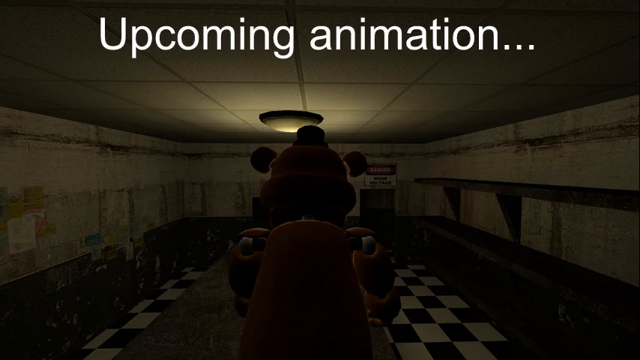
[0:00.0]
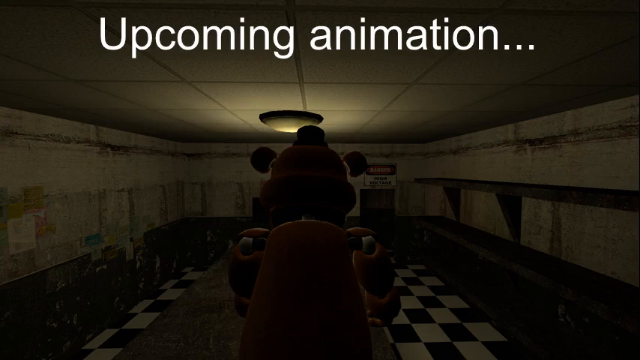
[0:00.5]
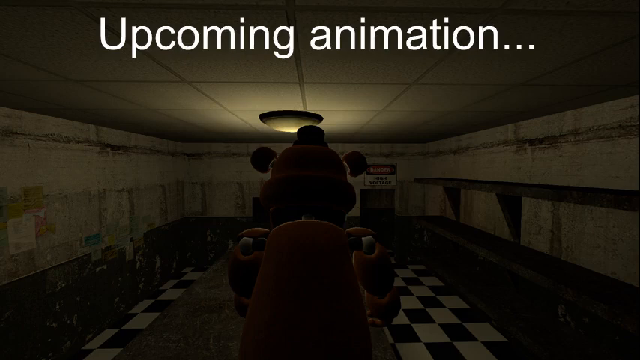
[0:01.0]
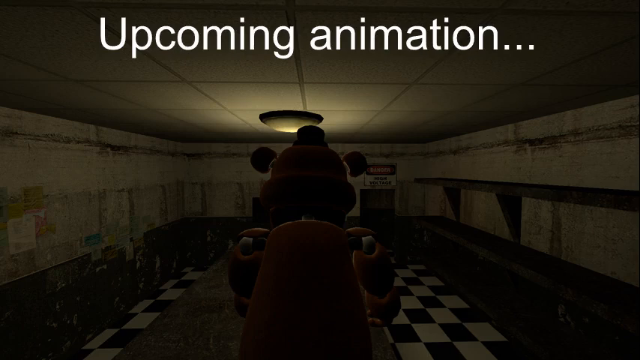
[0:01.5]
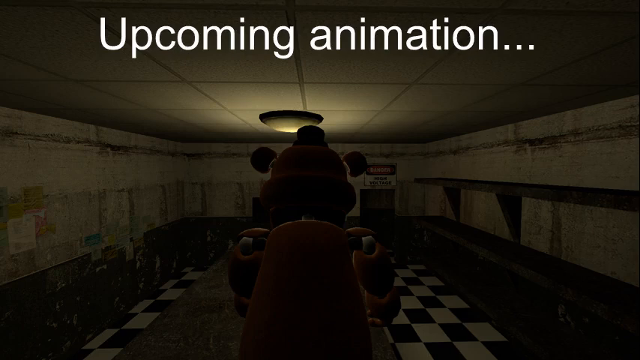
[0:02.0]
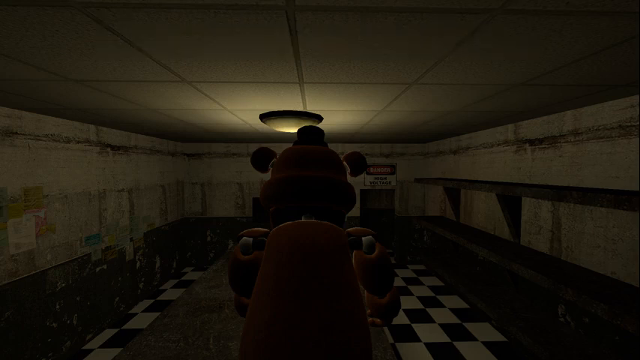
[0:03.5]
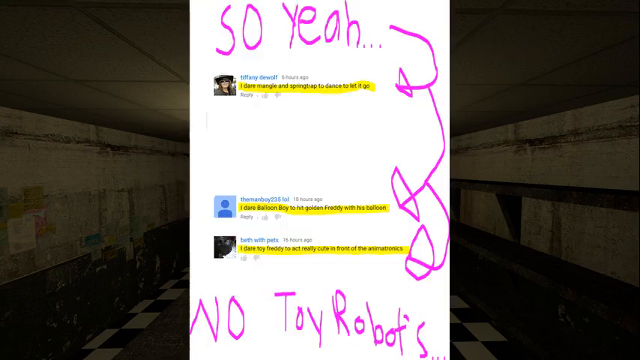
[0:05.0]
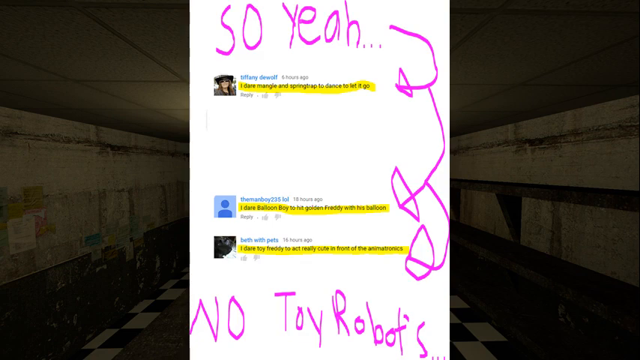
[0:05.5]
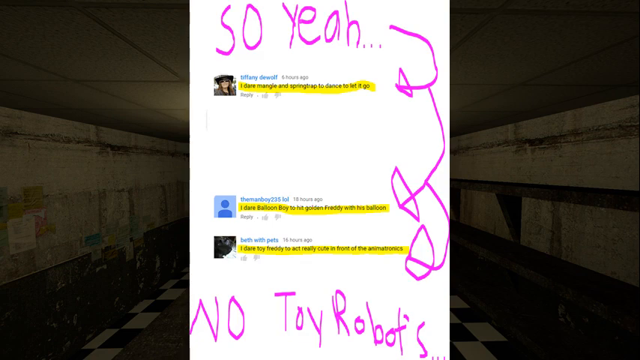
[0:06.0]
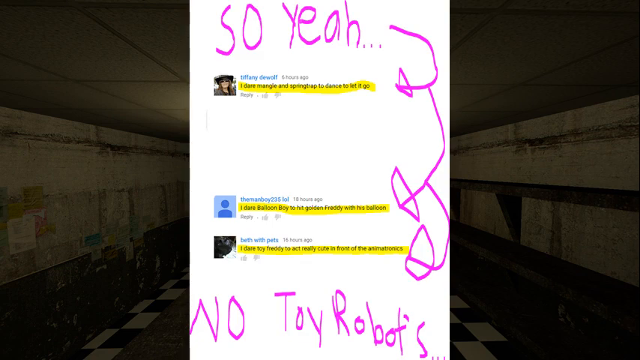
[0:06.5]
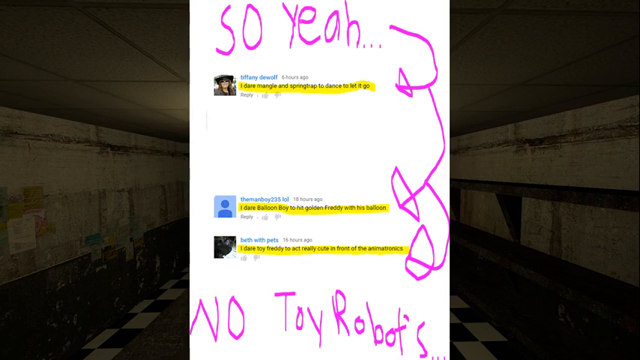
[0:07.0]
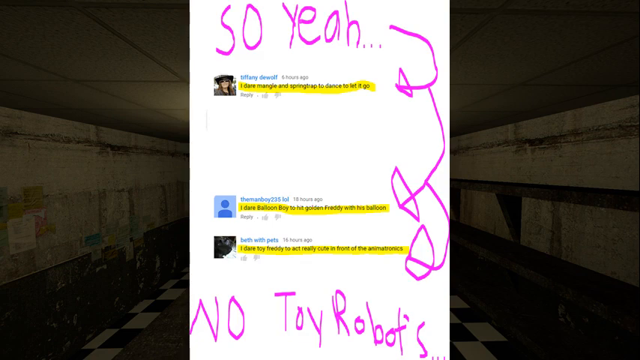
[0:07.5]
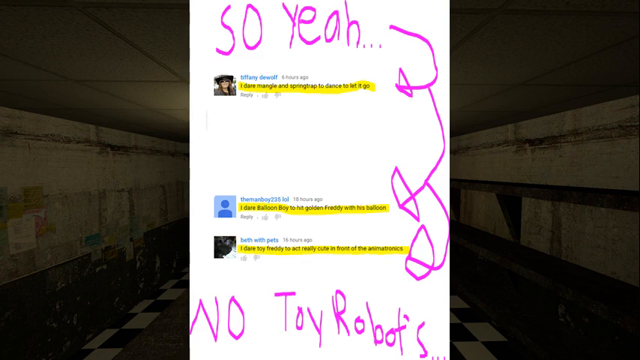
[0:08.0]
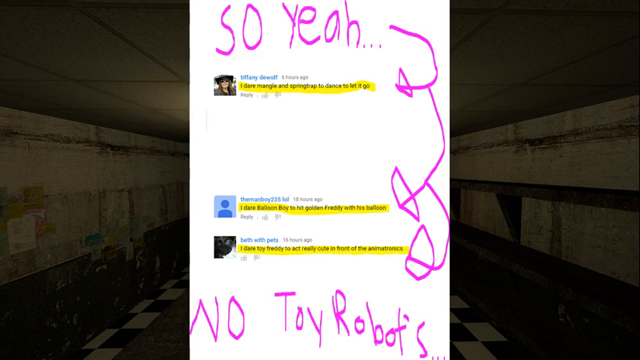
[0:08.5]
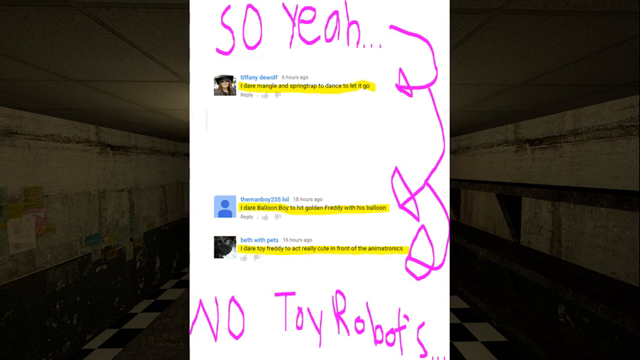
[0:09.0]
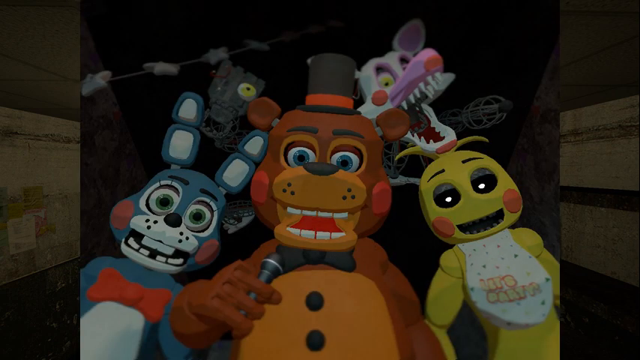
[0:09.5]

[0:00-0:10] The video opens with what appears to be a static image from a video game, with the words 'Upcoming animation...' superimposed in white writing at the top of the screen. The image appears to show a large robotic character standing in a dimly lit room with a black and white checkerboard floor, ceiling tiles with a single light in the centre of them, a shelf off to the right, and a sign on the facing wall saying 'Danger high voltage'. The white text fades out and a pop-up screen appears, occupying the middle of the screen. It has hand-drawn digital writing in pink which says 'So yeah' and 'no toy robots', along with what appear to be three comments posted on a social media platform. The first, by Tiffany DeWolf, says 'I dare mangle and springtrap to dance to let it go'. The next, by manboy235lol, says 'I dare balloon boy to hit golden freddy with his balloon,' and the last, by Bethwithpets, says 'I dare toy freddy to act really cute in front of the animatronics'. The video then cuts to a large shot of a group of animatronic characters, five in total in the foreground: an animatronic rabbit, a large bear and an indistinct yellow character.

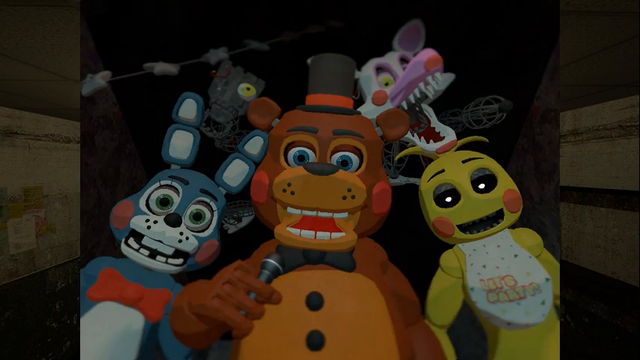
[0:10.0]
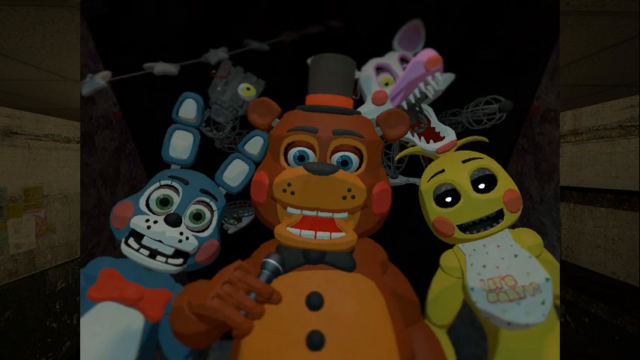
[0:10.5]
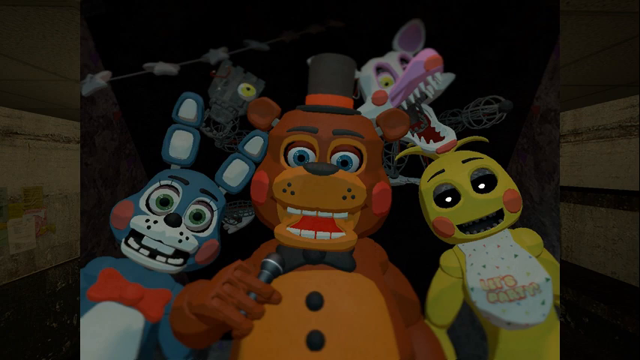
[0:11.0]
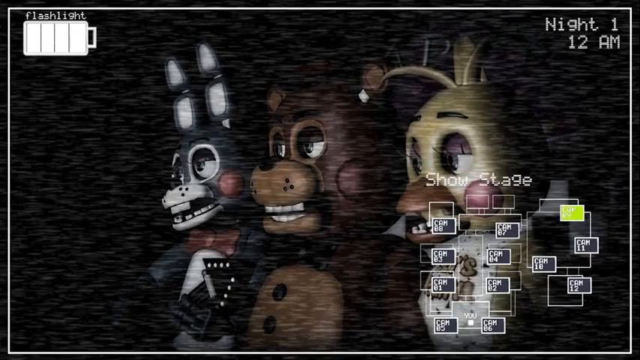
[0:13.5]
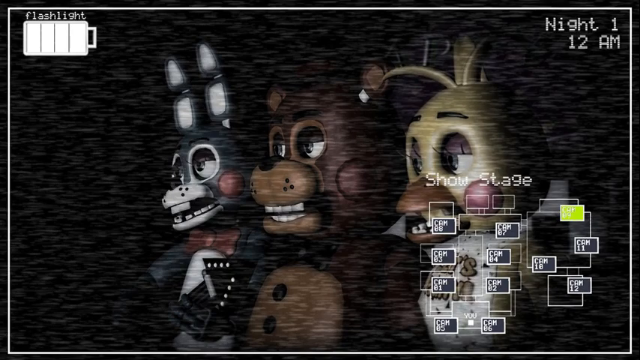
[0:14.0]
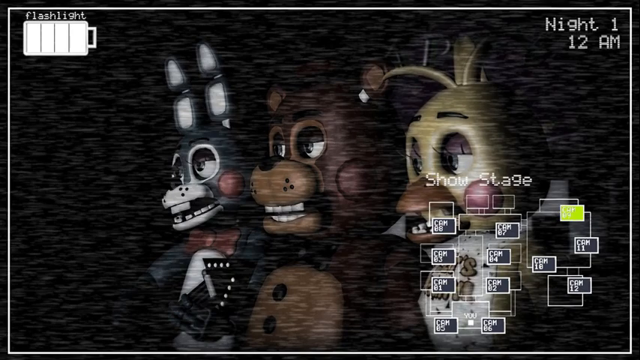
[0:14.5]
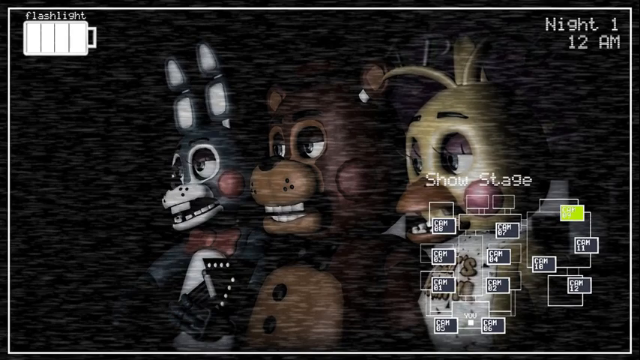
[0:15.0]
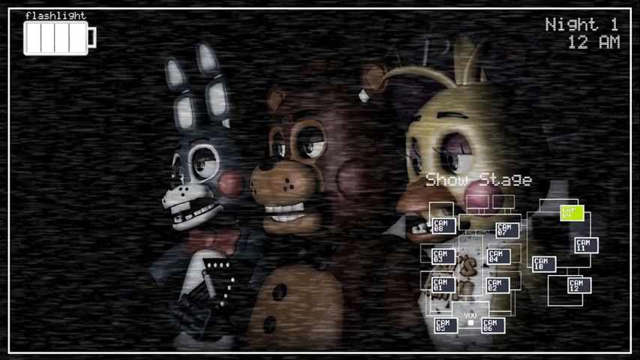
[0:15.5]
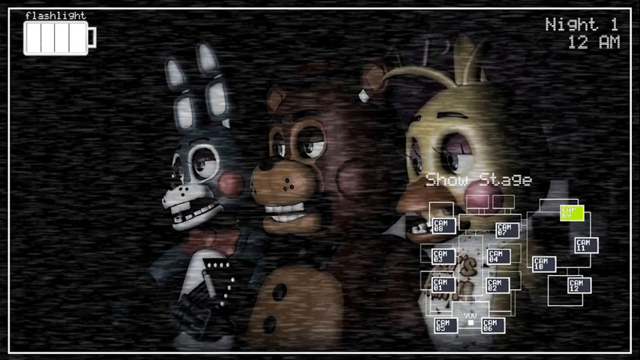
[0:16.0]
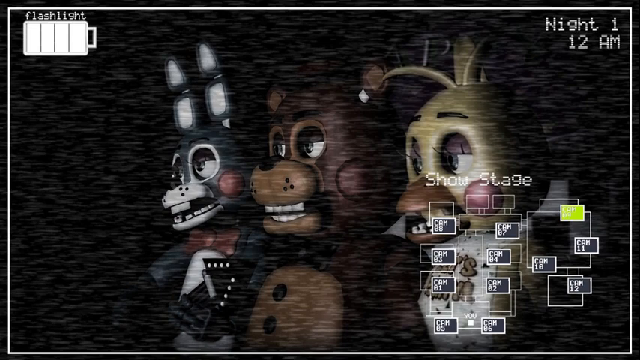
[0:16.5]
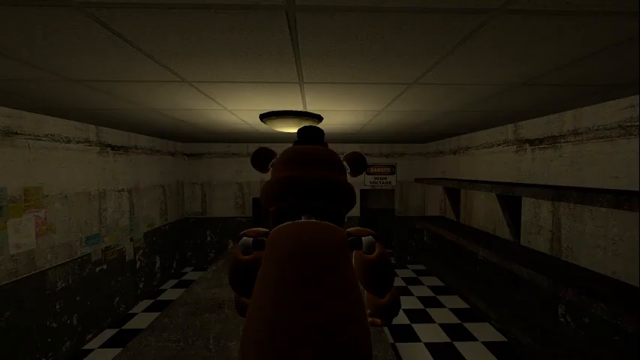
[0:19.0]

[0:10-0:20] A section of screen in the centre is superimposed on top of the gameplay image. This central image shows five animatronic characters as if they were cartoon animals. The three in the foreground are a grey or blue rabbit, a brown bear and a yellow, perhaps robotic character. In the background is what might be a robotic snake and perhaps a white robotic fox or wolf. This remains on screen for several seconds before the entire screen is replaced by what appears to be another image from a computer game, showing three of the characters side by side looking off to the left of the screen: a grey rabbit, a brown bear and perhaps a yellow bird. The screen is made to look like video footage, with a digital grain effect applied. In the top left is the word flashlight and a battery icon, as if to indicate digitally recorded footage. In the top right are the words Night 1, 12am, and at the bottom right there appears to be a diagram showing cameras, indicated by the words 'cam', with 'Show stage' above it. This image remains on screen for several seconds before the video cuts back to the original footage of the animatronic character on its own in the dimly lit room.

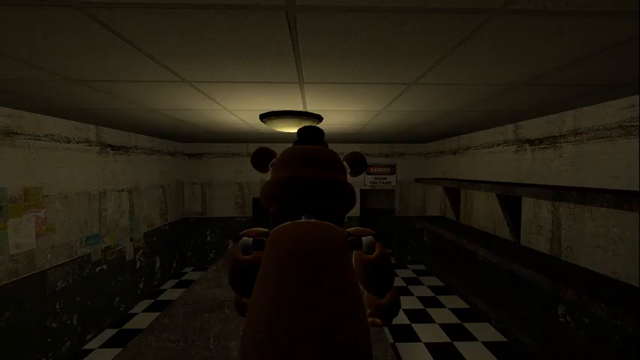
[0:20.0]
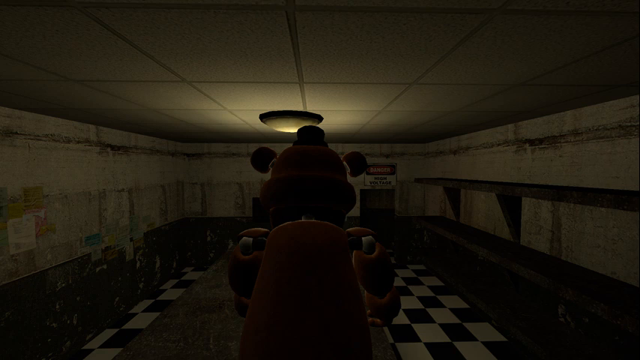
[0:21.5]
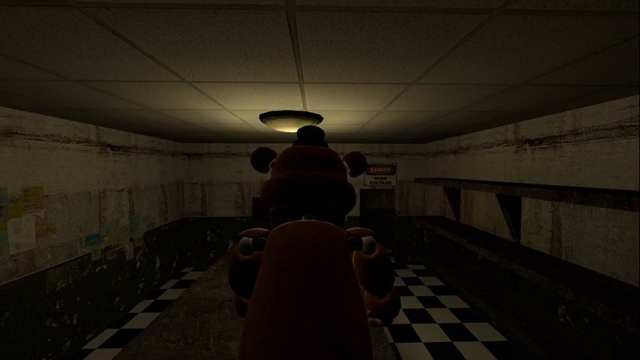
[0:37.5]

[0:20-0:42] The video is back on the original image, a static shot that appears to be a picture of gameplay footage from a video game. The shot is taken from directly behind a large animatronic character that appears it could be a bear wearing a hat, looking at the room it is standing in. There is a tiled ceiling with a central light just above and in front of the bear's head, and the floor has a black and white checkerboard tile effect. The bear appears to be standing in front of a table that obscures part of the floor. The walls are very dirty in appearance, and the room appears quite dilapidated and run down. On the wall in front of the bear is a sign with white writing against red saying 'danger', and underneath, in black writing against white, 'high voltage'. The right-hand wall of the room appears to be lined with wooden shelving.